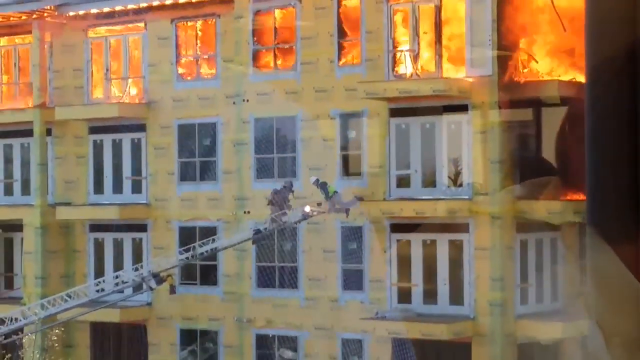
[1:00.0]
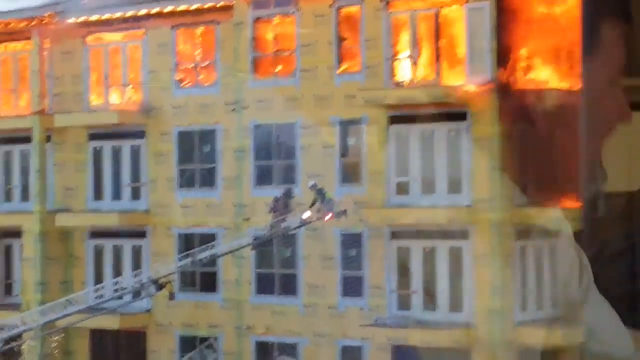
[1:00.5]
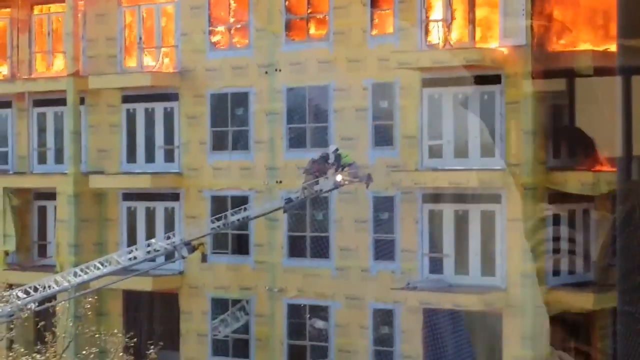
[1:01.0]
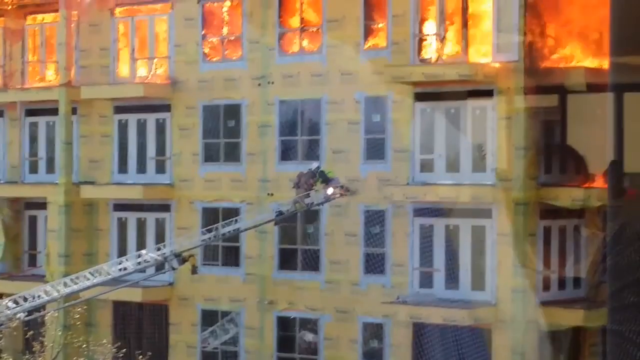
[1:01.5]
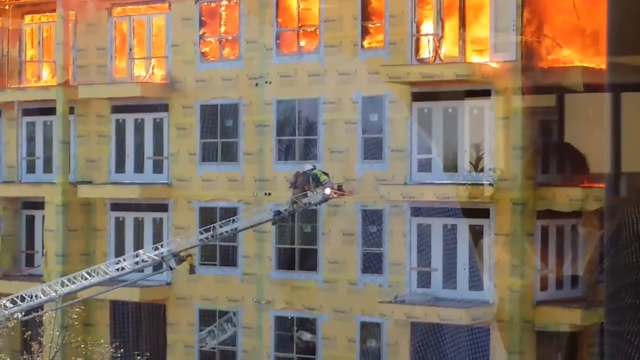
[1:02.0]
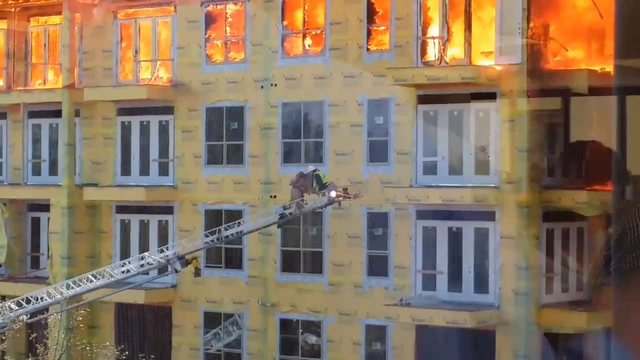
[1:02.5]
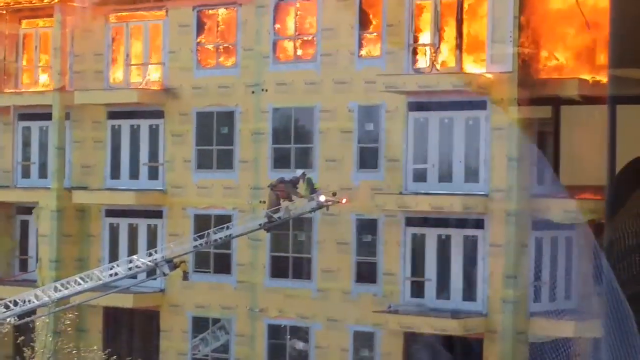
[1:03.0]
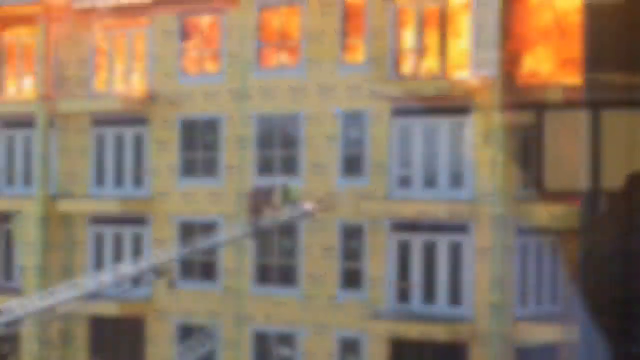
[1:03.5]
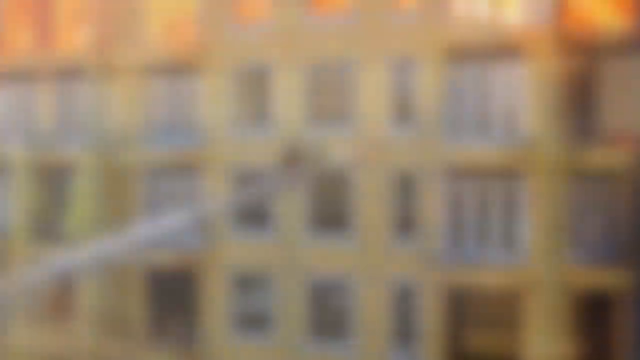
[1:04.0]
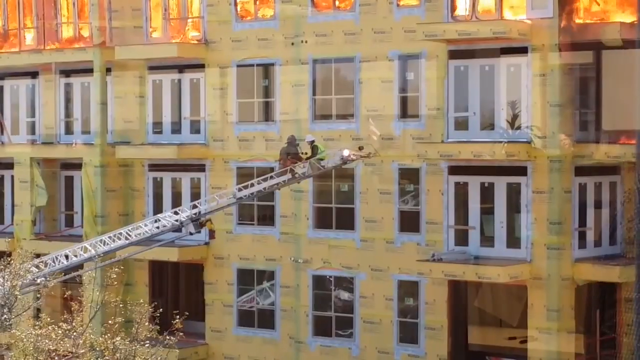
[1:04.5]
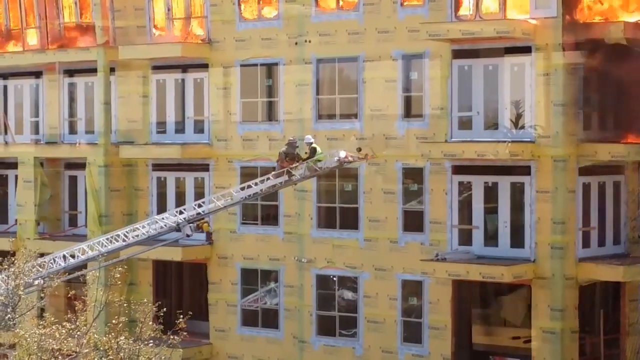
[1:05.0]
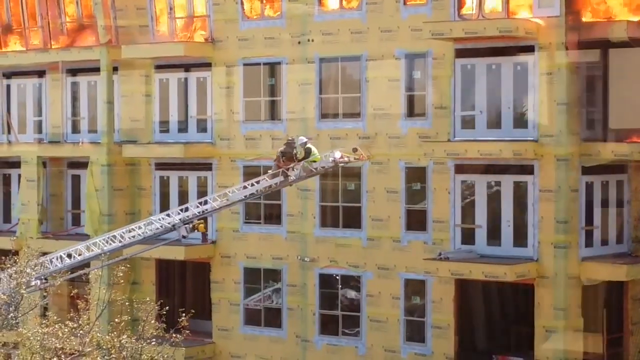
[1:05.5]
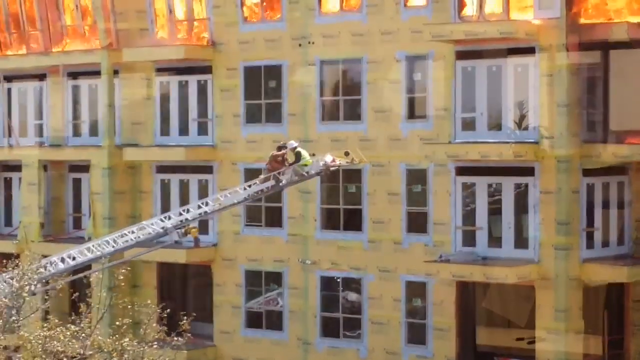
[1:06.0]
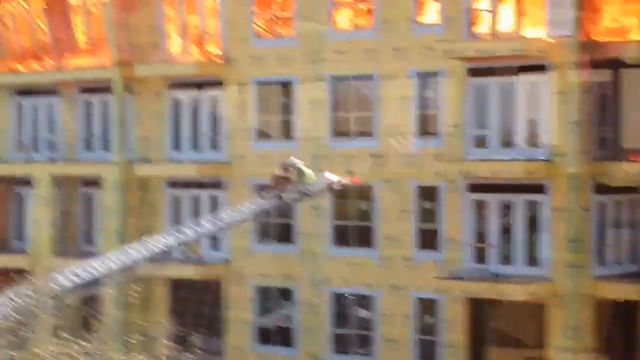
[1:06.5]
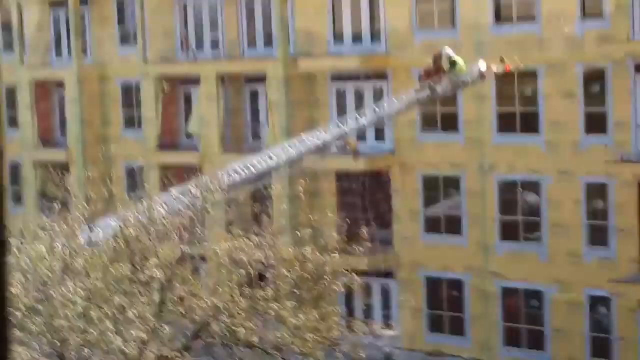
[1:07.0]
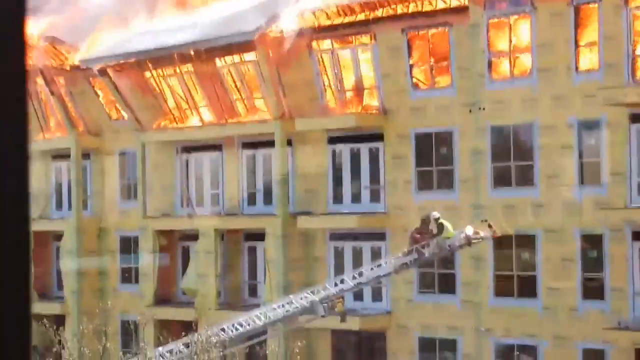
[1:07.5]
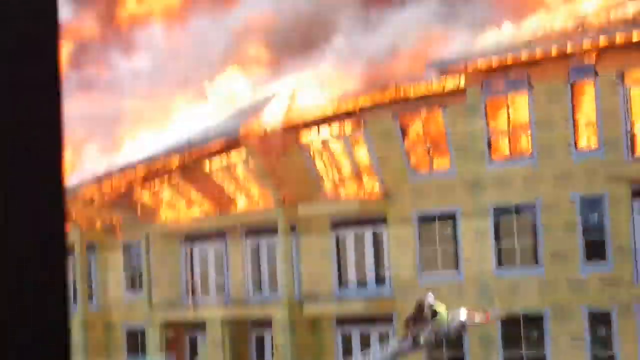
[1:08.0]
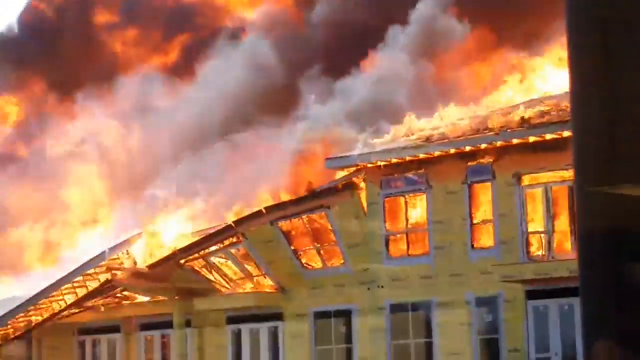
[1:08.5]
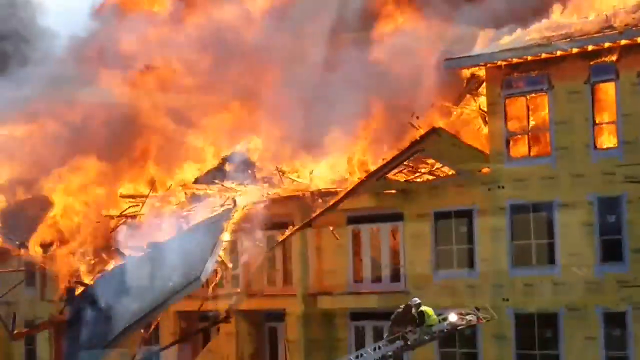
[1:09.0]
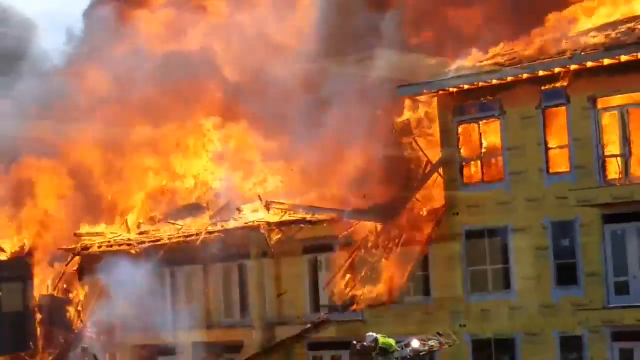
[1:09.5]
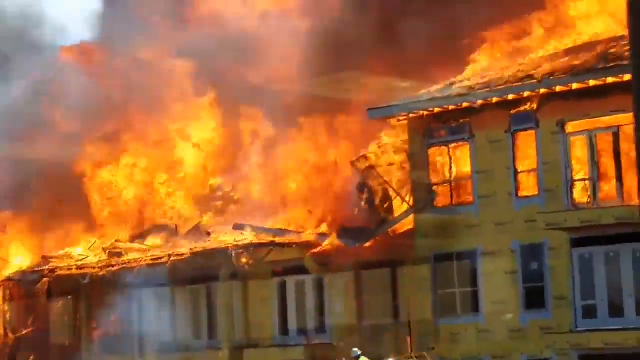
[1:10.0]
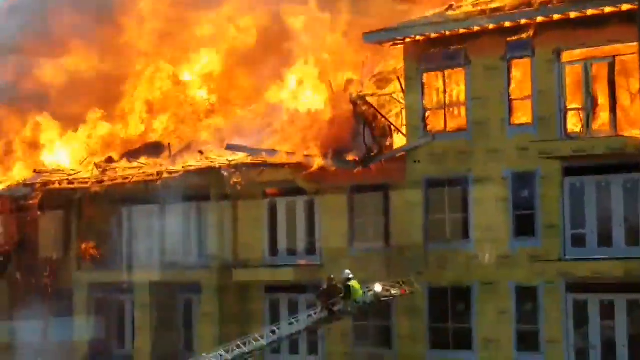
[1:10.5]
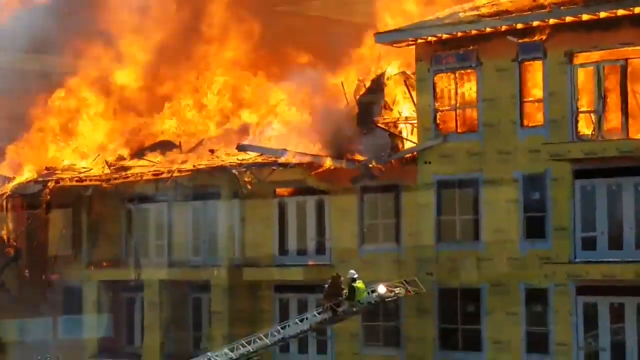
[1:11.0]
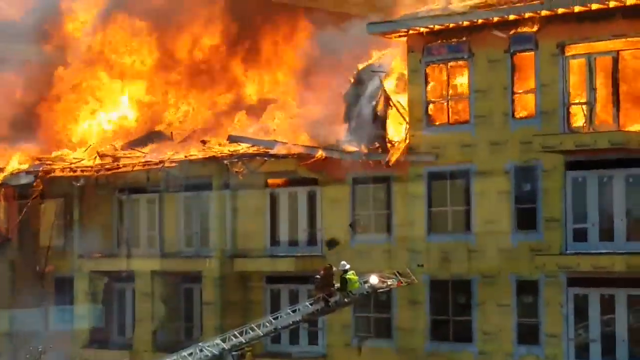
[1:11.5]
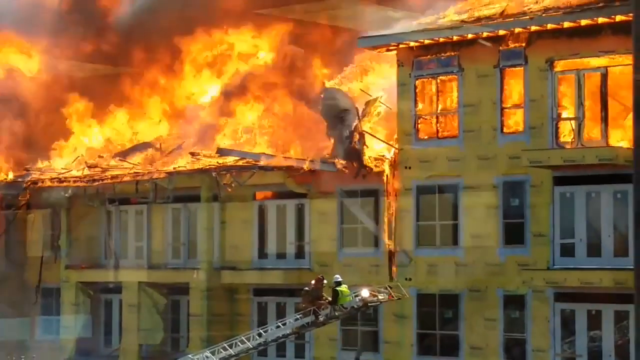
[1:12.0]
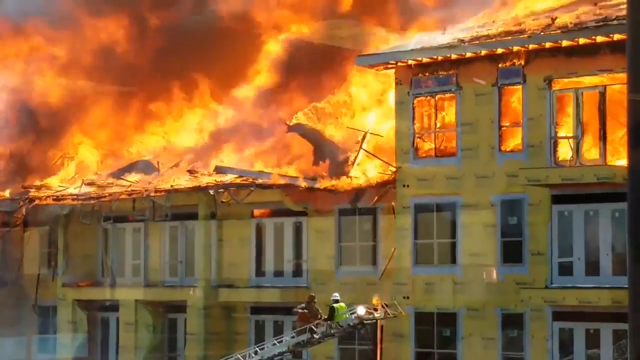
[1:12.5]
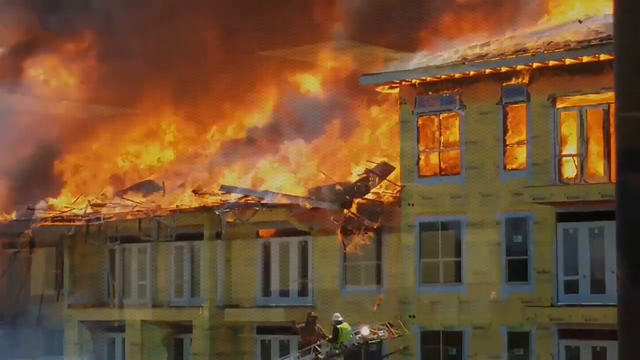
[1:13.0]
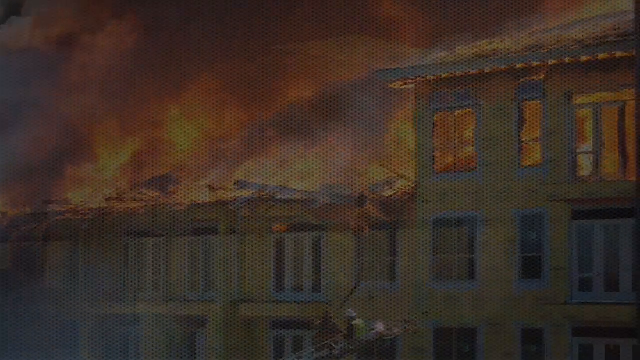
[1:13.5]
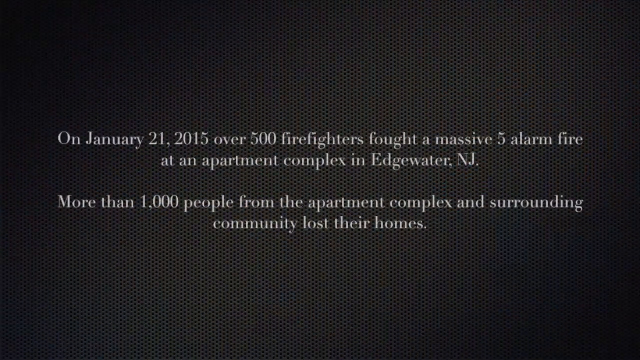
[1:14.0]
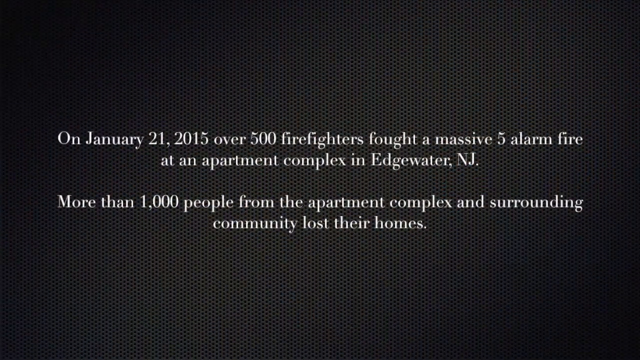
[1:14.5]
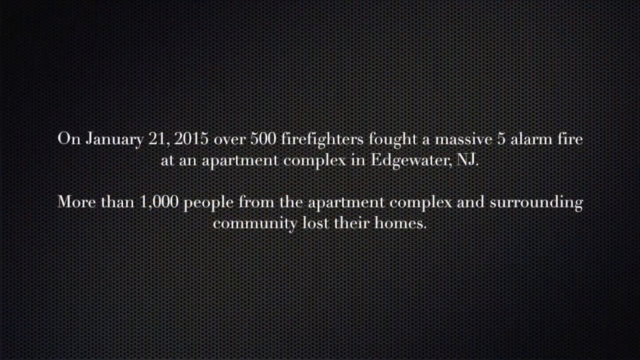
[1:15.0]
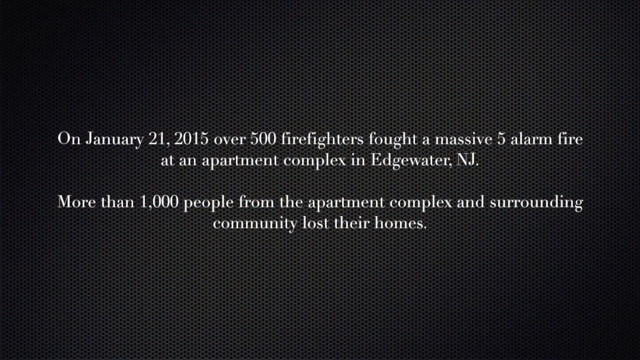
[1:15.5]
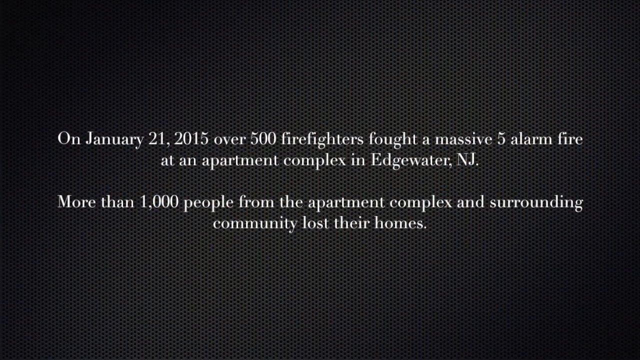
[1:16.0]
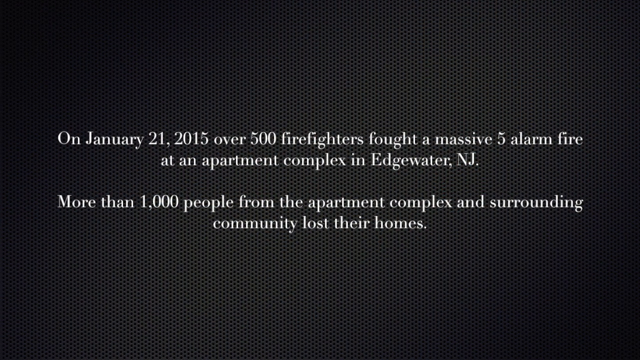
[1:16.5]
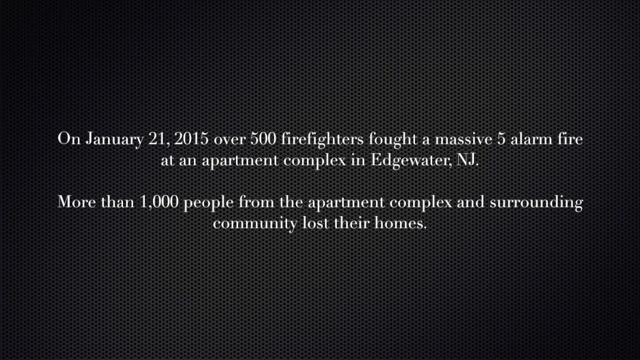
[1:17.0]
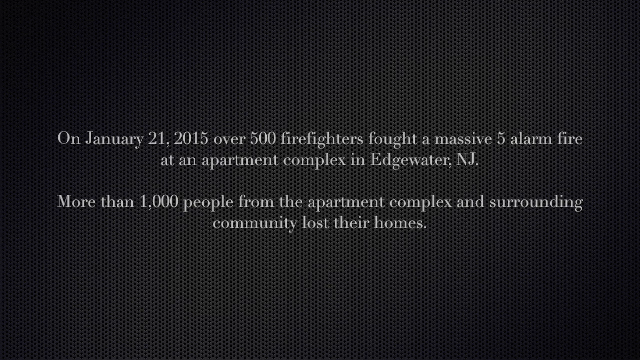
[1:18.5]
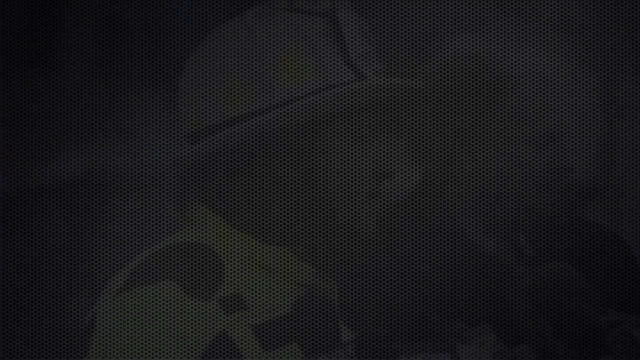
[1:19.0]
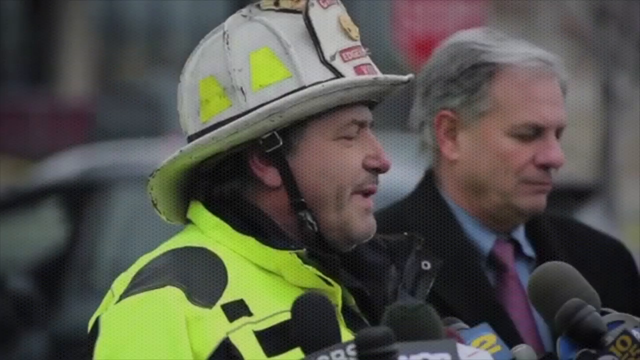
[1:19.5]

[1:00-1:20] The construction worker, who has jumped down to a lower ledge, climbs onto the ladder that one of the firemen has pulled up to rescue him. A fireman on the ladder helps him get onto the device. The ladder is then pulled back away from the building. As they are pulled away, the top of the building starts to fall in from the fire; both men put their heads down to avoid it, but it does not hit them. The video then cuts to a black screen again, this time with more writing: "on January 21, 2015, over 500 firefighters fought a massive five alarm fire at an apartment complex in Edgewater, New Jersey. More than 1,000 people from the apartment complex and surrounding community lost their homes."